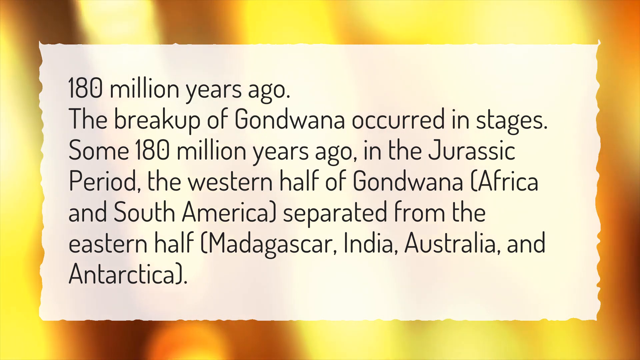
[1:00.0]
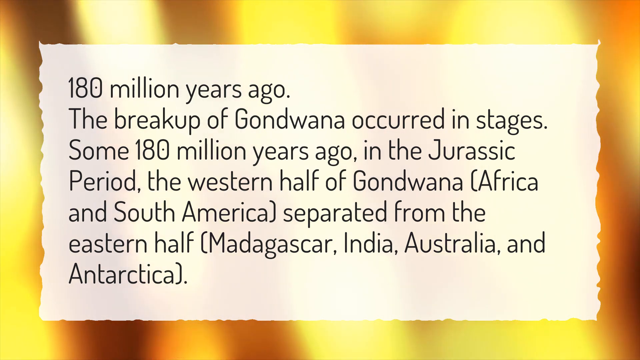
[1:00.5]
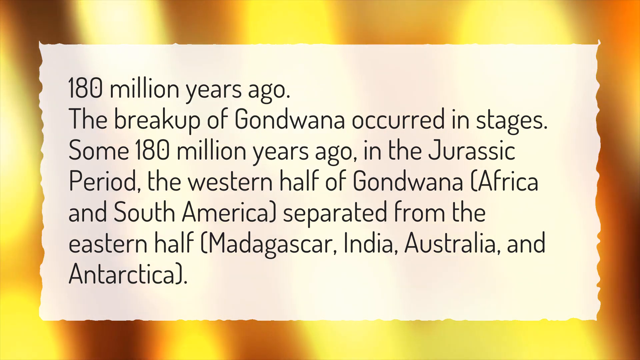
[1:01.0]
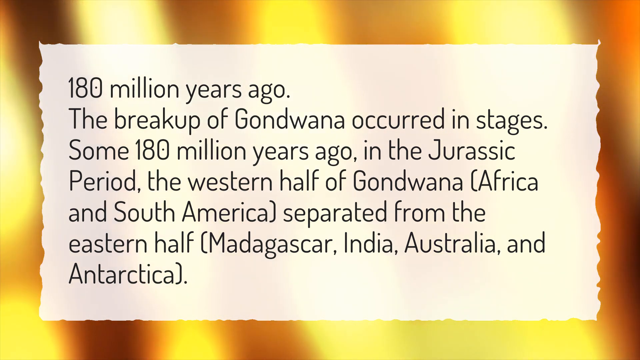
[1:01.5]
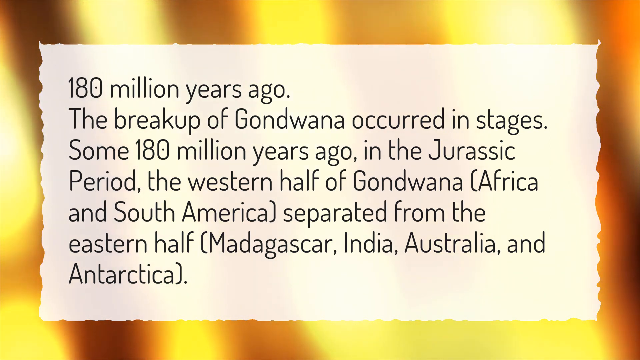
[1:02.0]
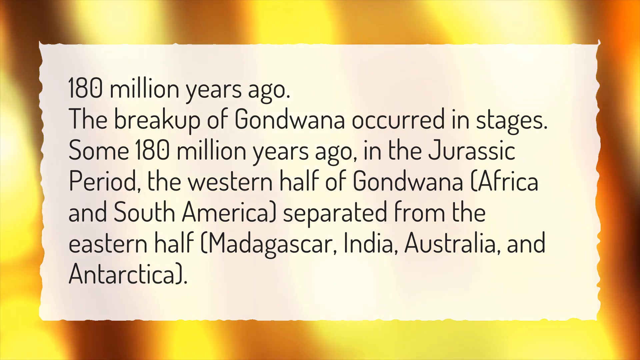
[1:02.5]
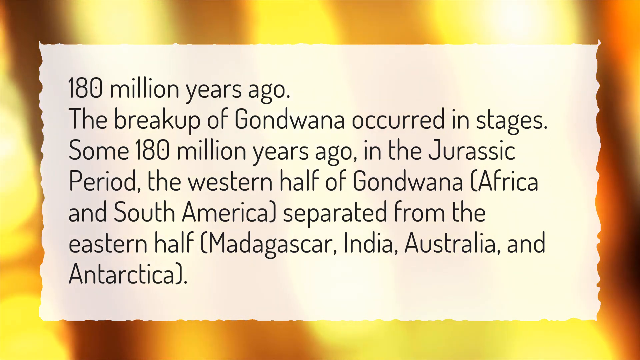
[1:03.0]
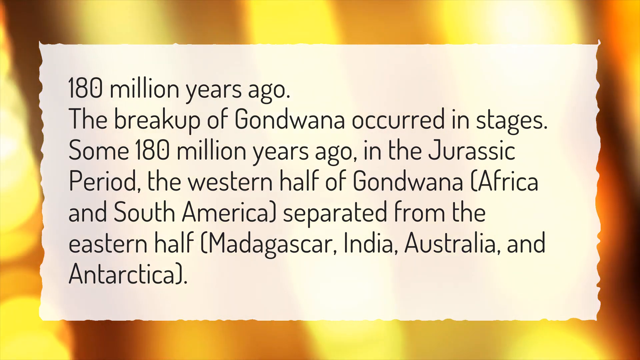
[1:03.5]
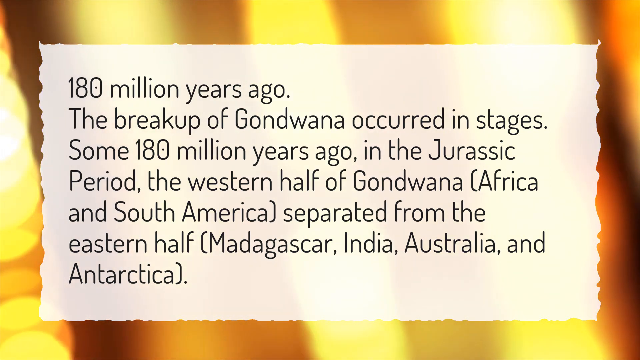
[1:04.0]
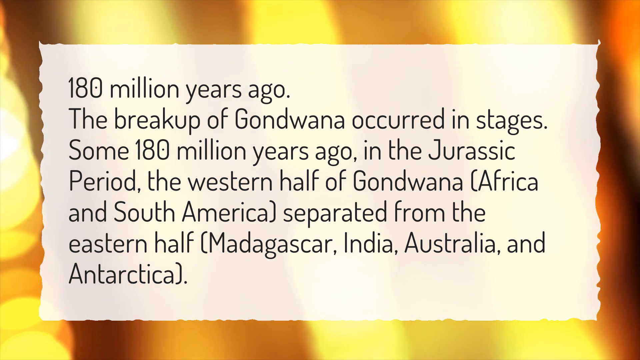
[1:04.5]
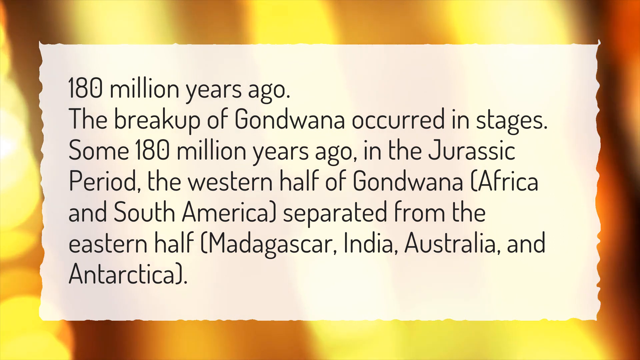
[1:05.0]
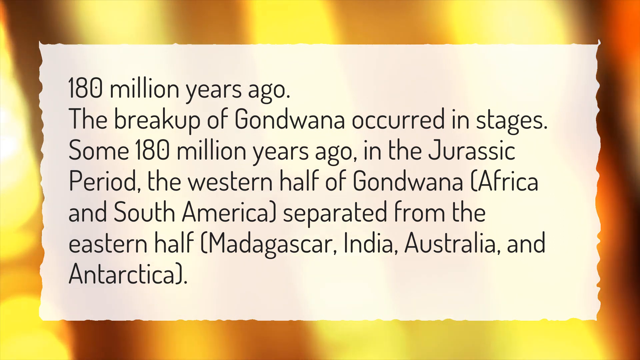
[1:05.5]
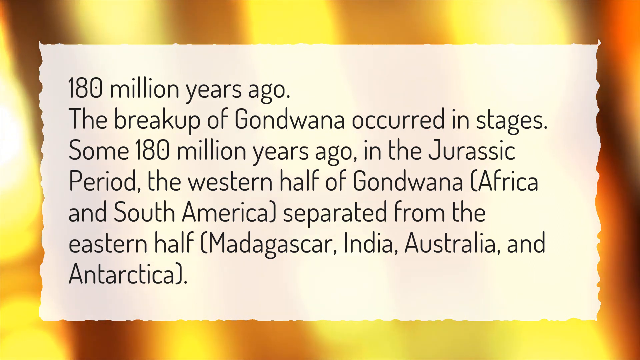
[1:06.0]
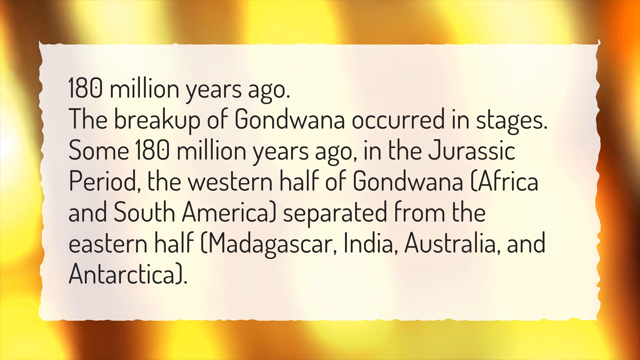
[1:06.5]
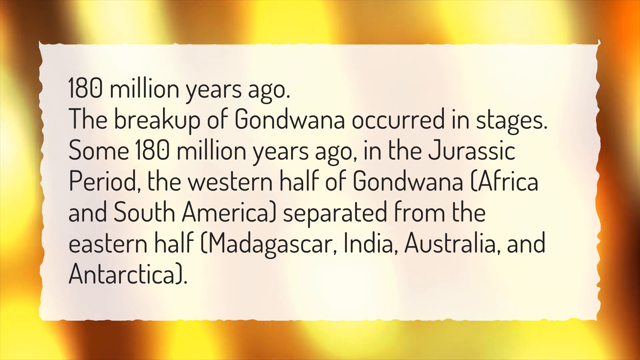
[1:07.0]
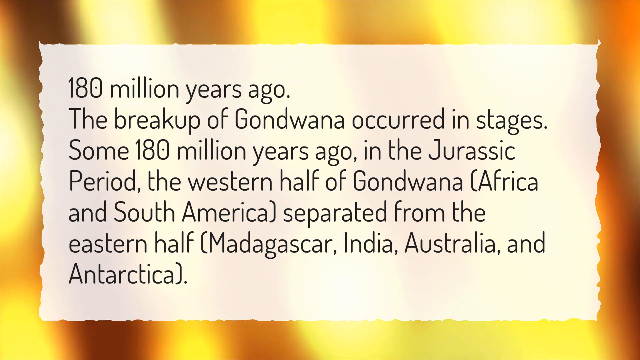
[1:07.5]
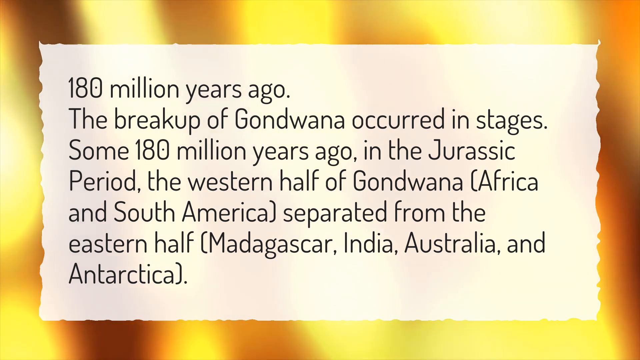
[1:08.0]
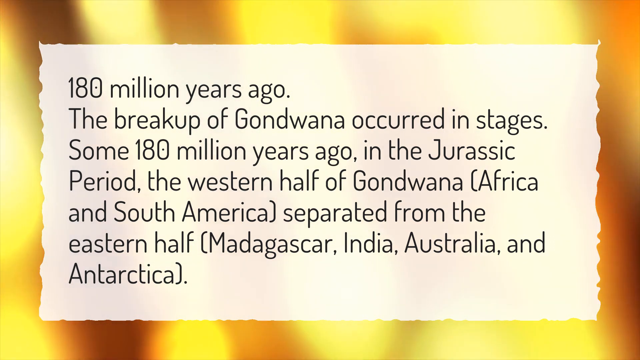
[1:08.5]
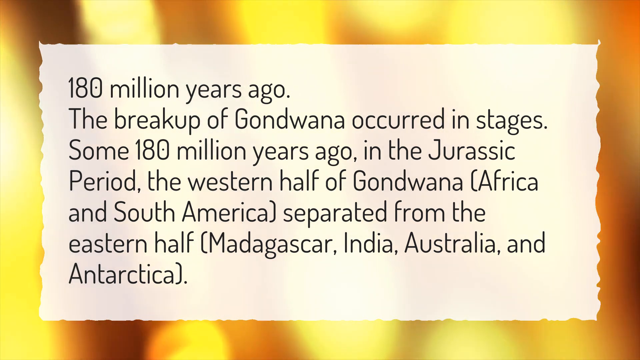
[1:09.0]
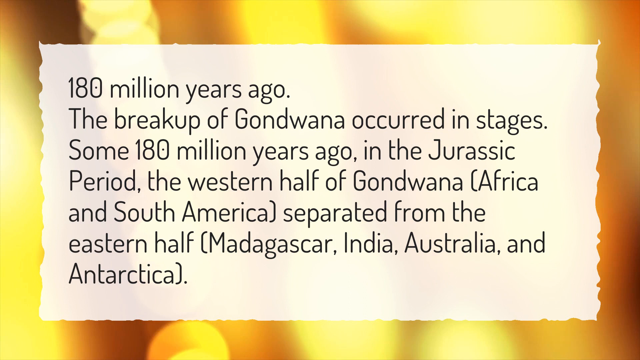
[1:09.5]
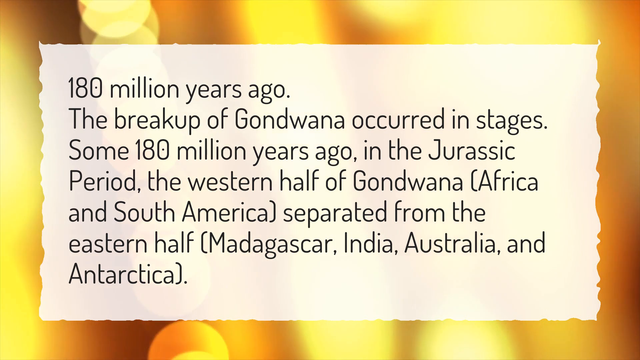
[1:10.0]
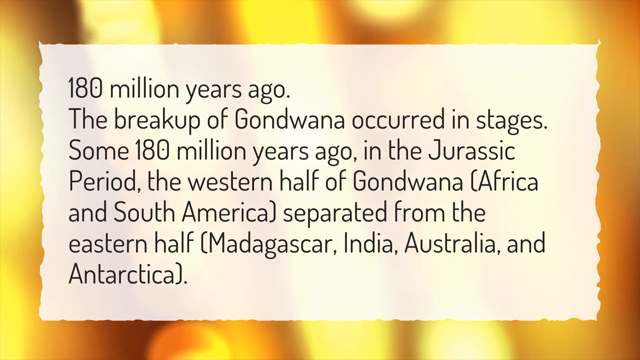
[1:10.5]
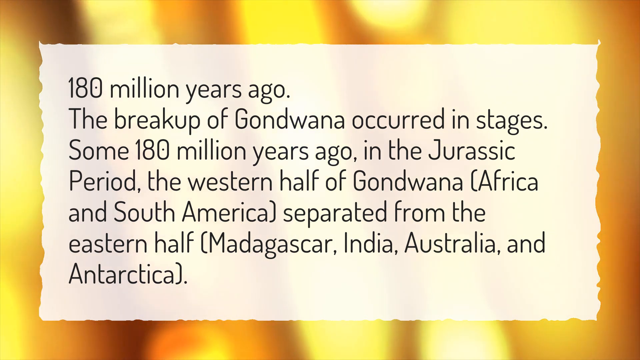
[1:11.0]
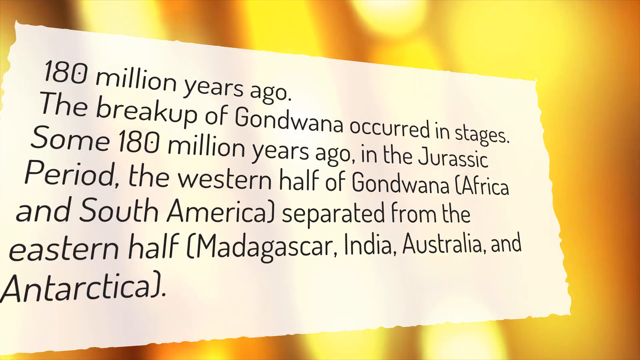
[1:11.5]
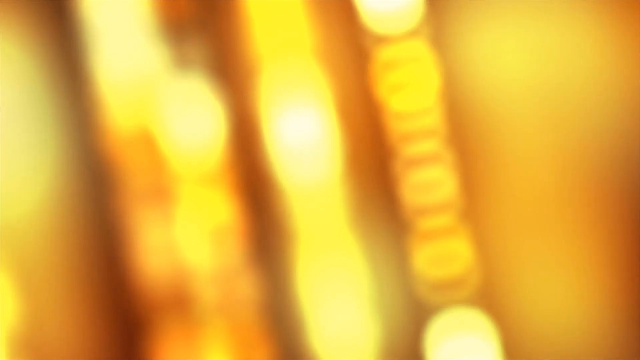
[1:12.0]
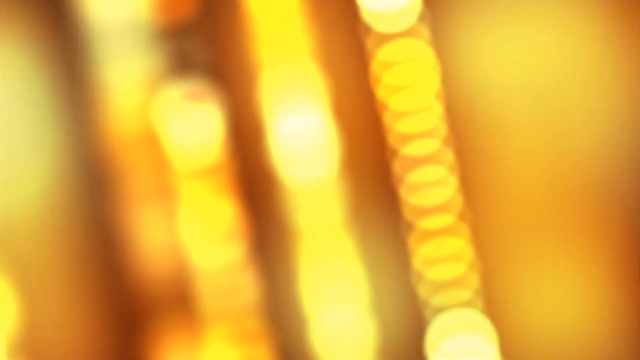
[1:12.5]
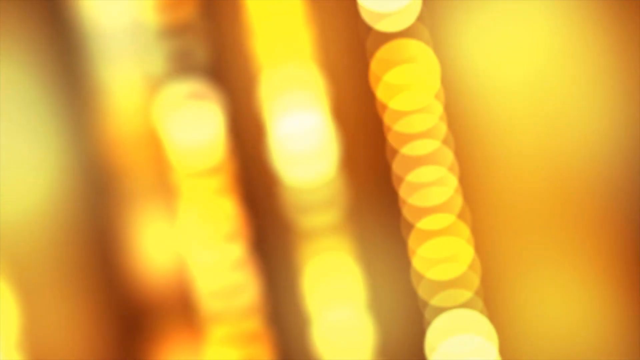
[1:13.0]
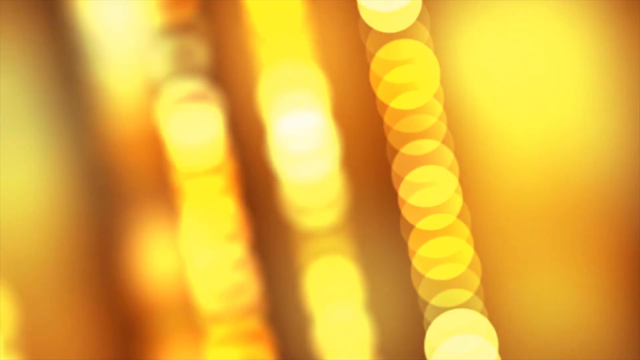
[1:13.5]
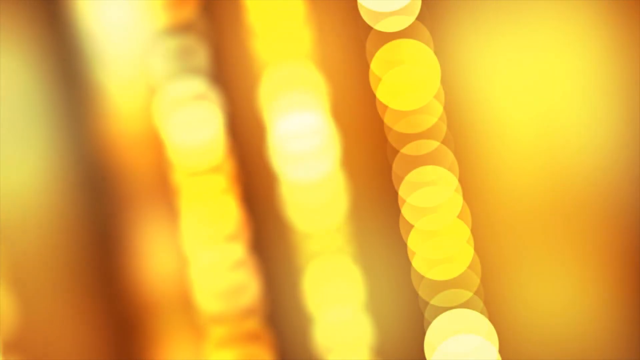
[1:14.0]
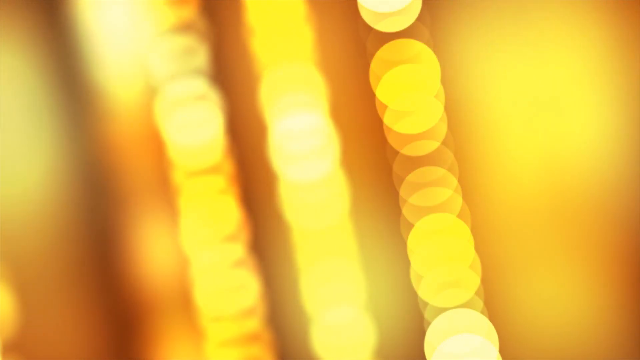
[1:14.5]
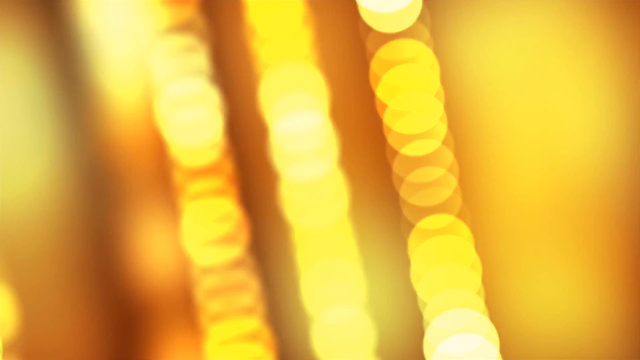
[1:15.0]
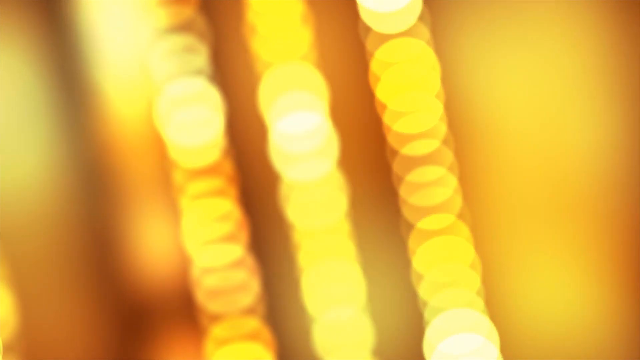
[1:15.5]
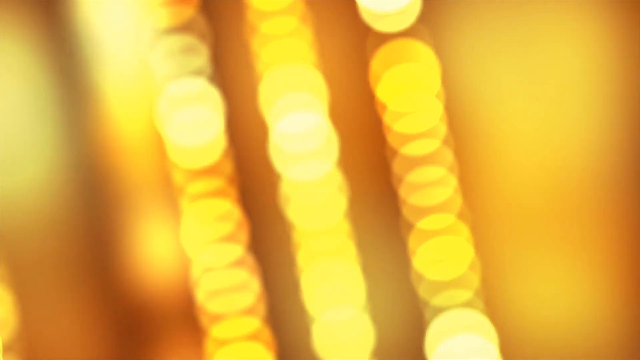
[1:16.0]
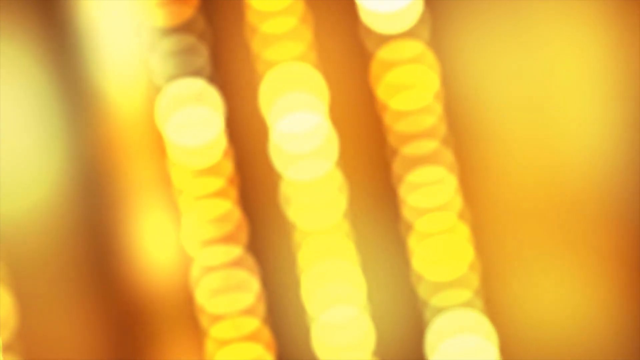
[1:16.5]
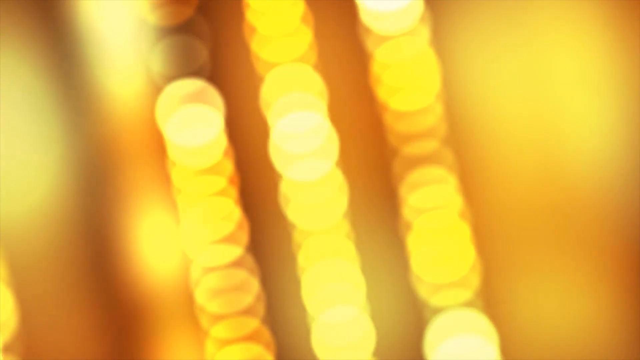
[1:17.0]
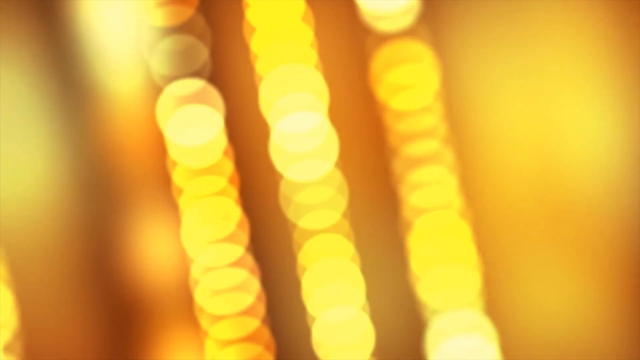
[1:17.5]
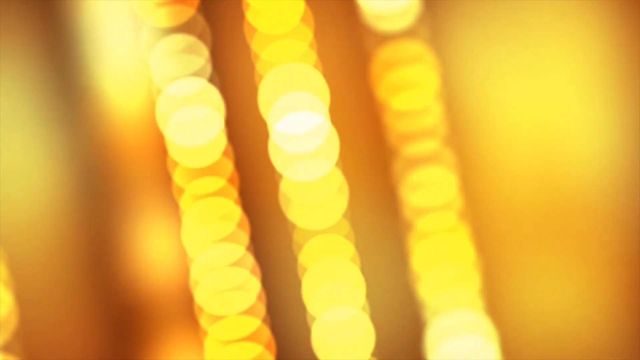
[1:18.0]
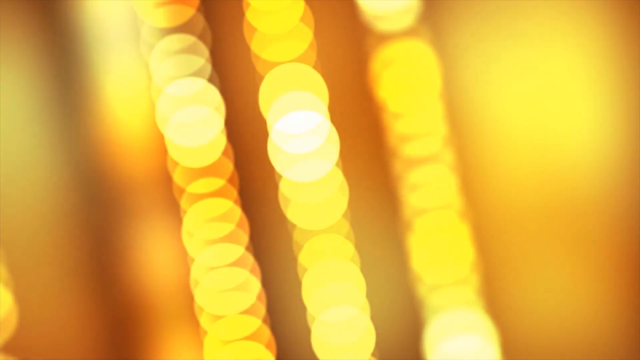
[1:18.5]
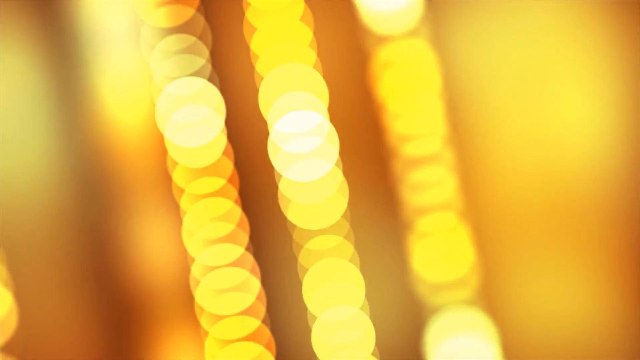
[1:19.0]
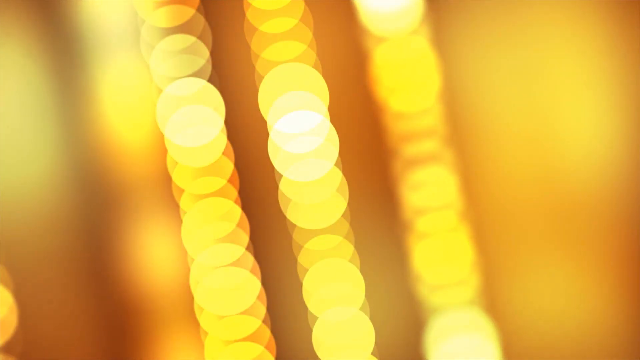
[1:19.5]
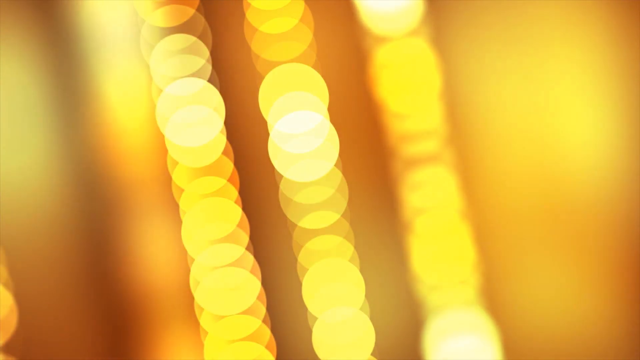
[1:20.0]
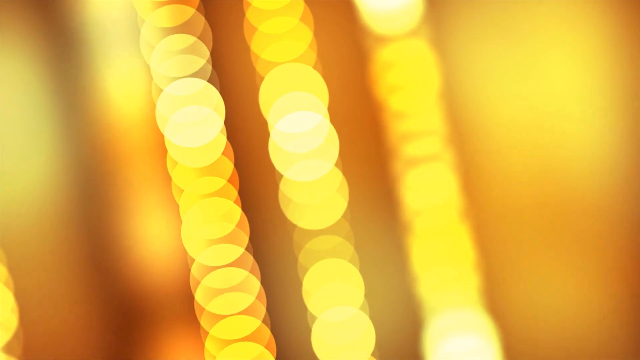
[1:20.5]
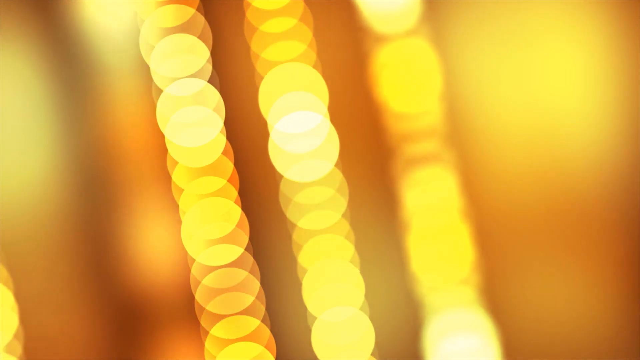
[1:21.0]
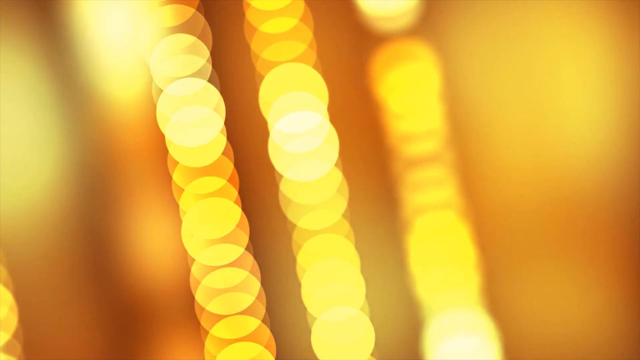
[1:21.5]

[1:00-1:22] A still, presentation-style image shows text on parchment-like paper that reads: "180 million years ago, the breakup of Gondwana occurred in stages. Some 180 million years ago, in the Jurassic period, the western half of Gondwana, Africa, and South America, separated from the eastern half, Madagascar, India, Australia, and Antarctica." This text stays on screen for about 20 seconds, then the parchment and text transition away, leaving only the background: many lights twinkling in a linear-like fashion. The lights are not very sparkly but consistently slide into one another in a wave-like pattern, and the video ends. No creator or school is named.